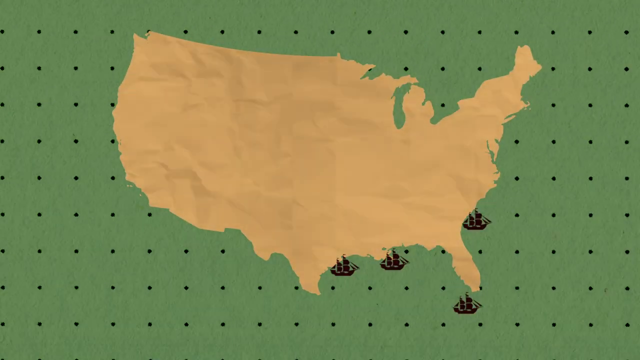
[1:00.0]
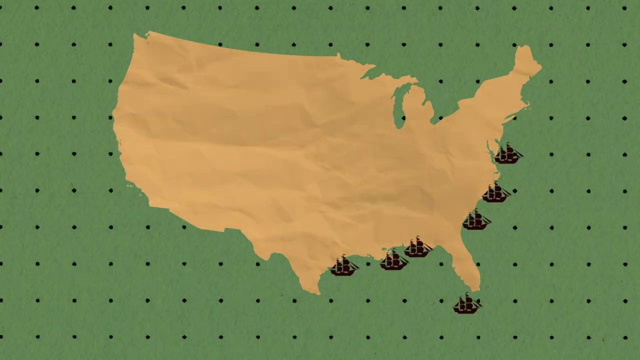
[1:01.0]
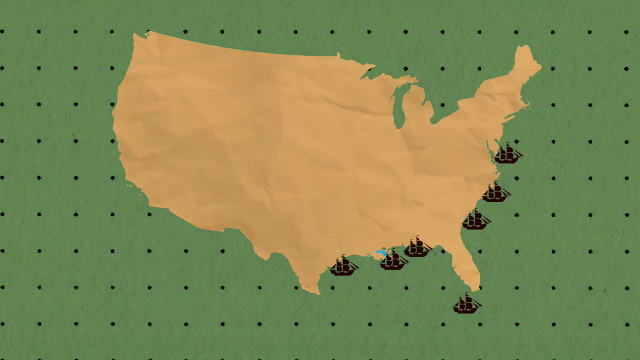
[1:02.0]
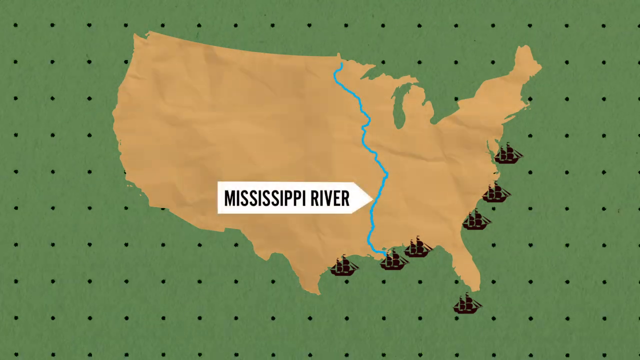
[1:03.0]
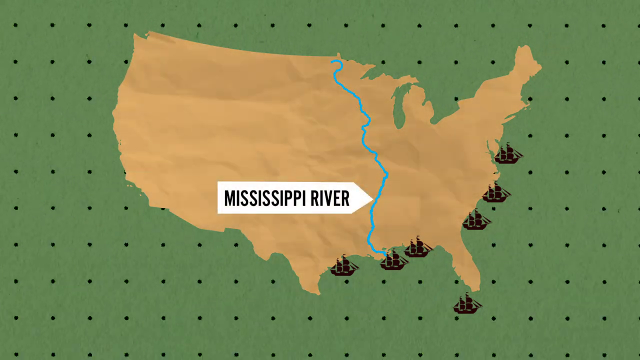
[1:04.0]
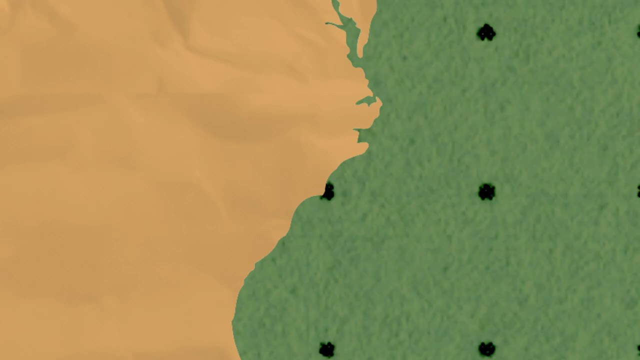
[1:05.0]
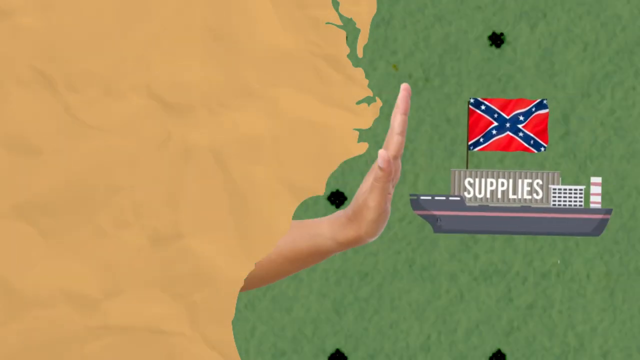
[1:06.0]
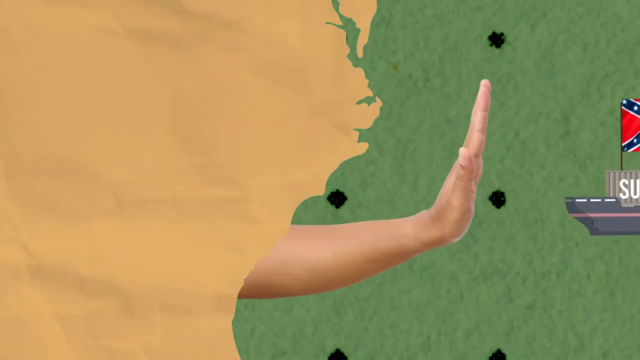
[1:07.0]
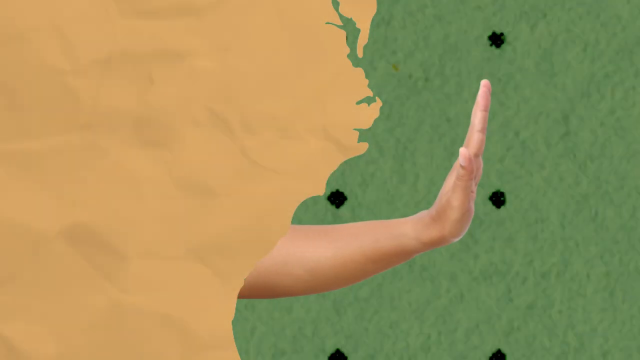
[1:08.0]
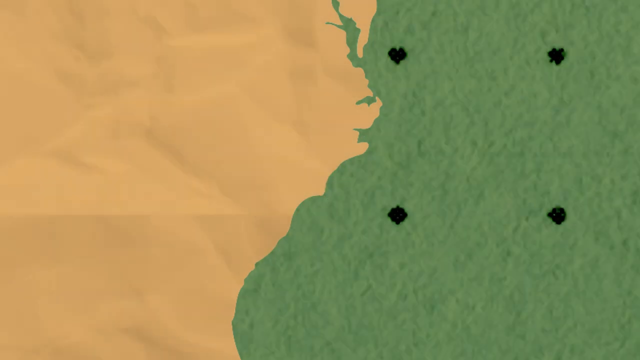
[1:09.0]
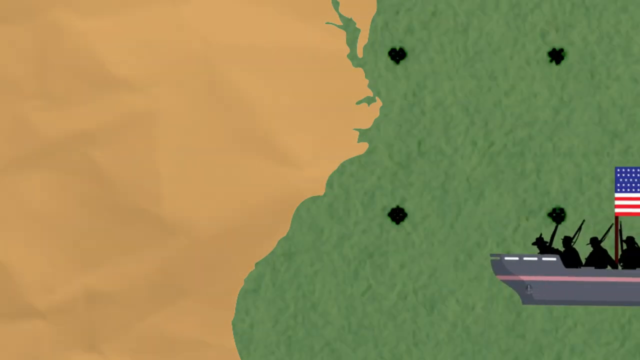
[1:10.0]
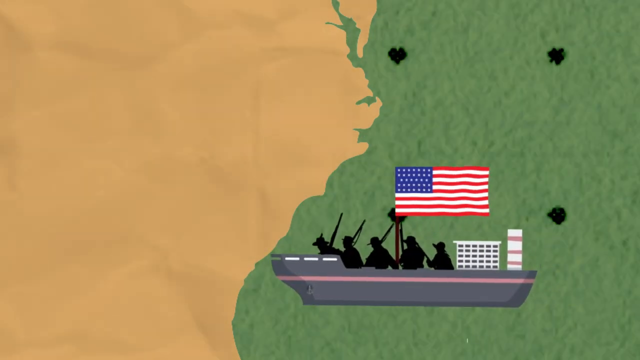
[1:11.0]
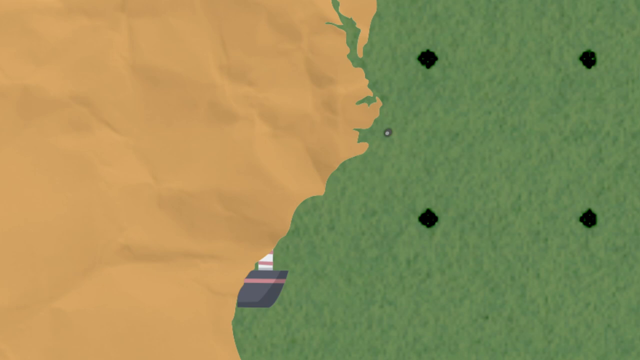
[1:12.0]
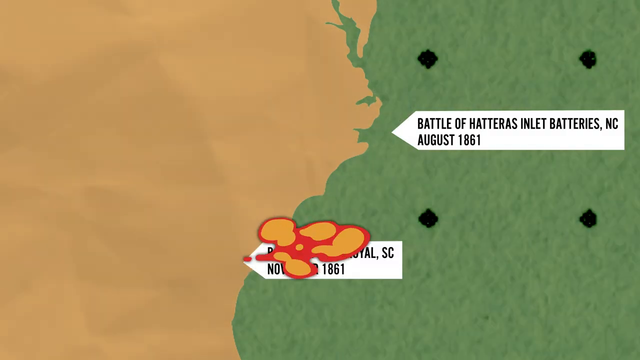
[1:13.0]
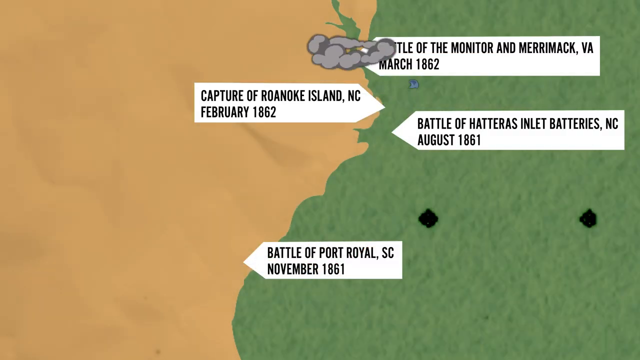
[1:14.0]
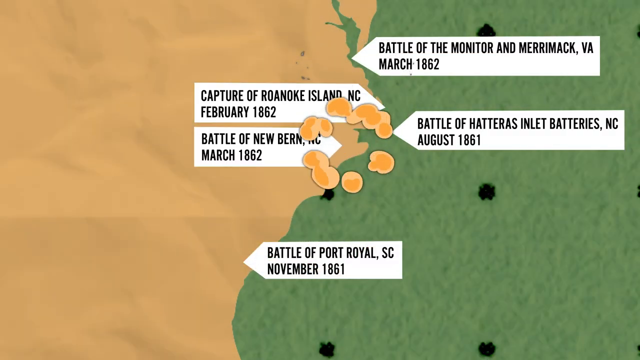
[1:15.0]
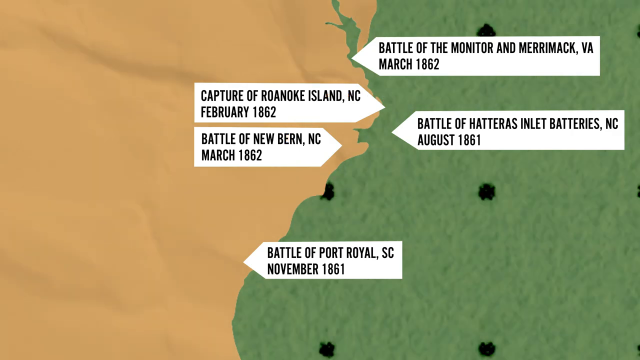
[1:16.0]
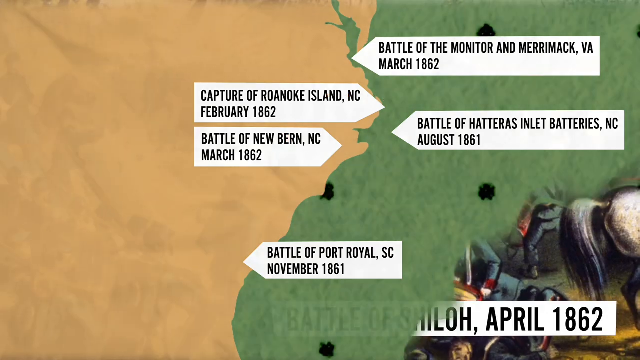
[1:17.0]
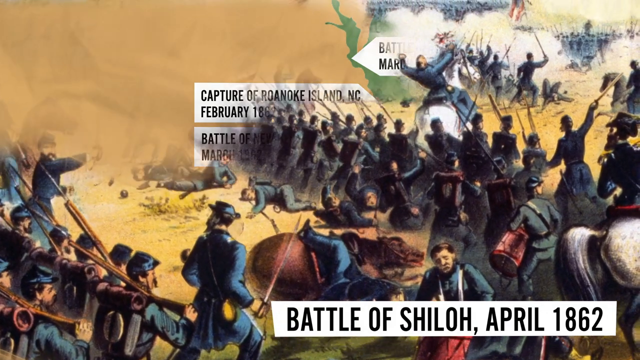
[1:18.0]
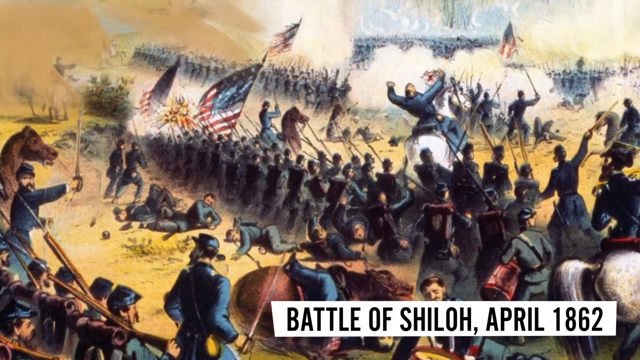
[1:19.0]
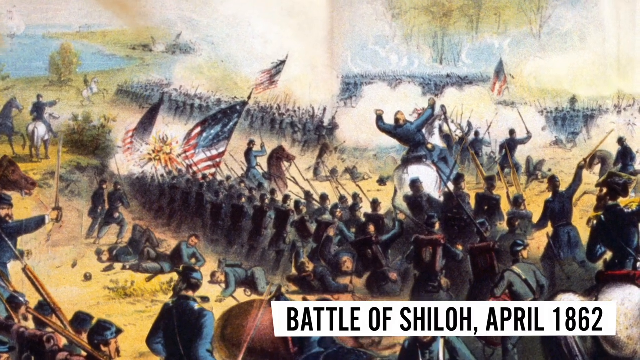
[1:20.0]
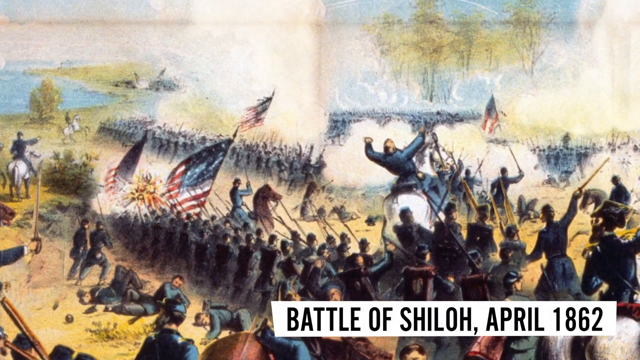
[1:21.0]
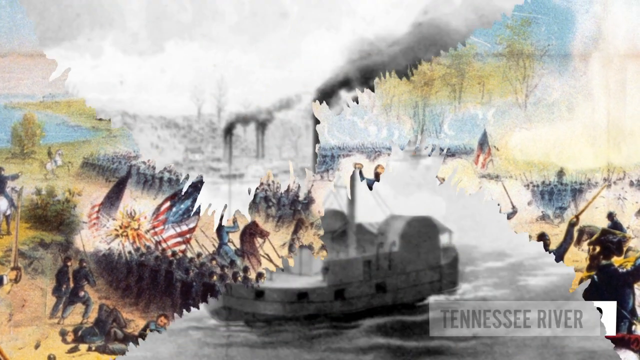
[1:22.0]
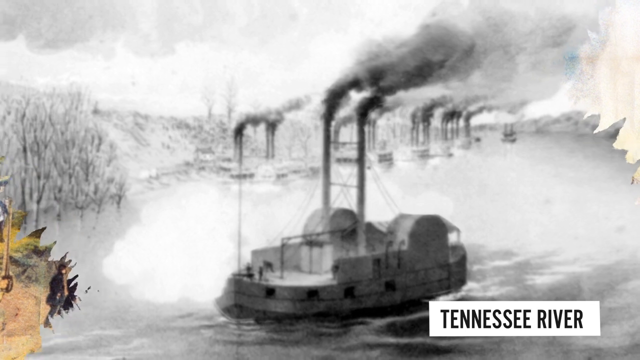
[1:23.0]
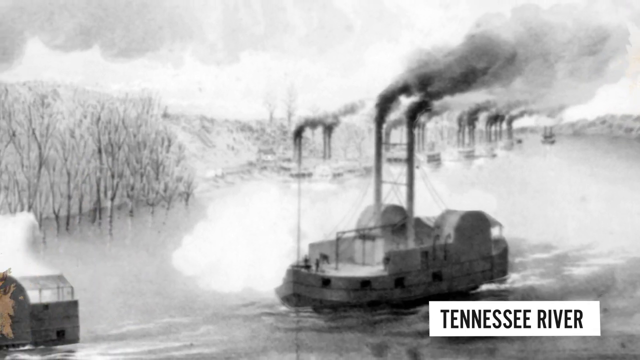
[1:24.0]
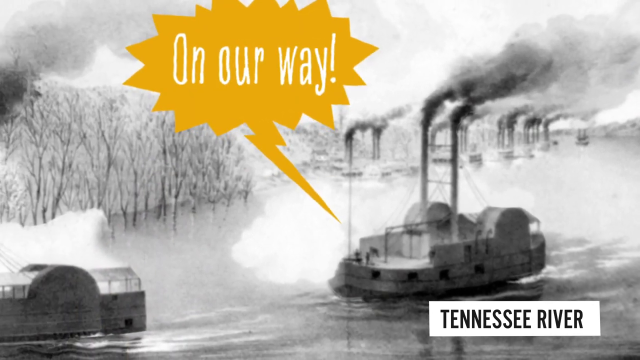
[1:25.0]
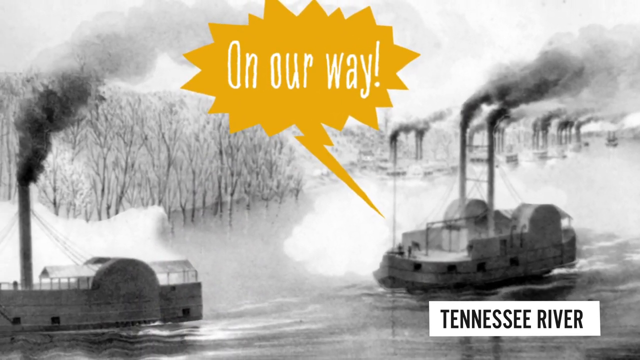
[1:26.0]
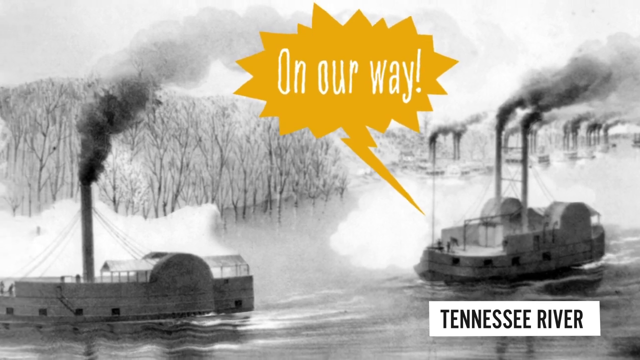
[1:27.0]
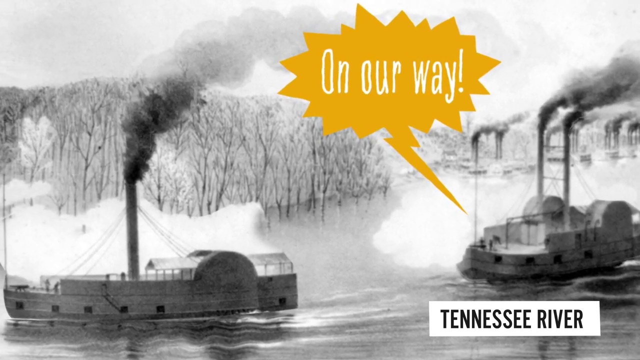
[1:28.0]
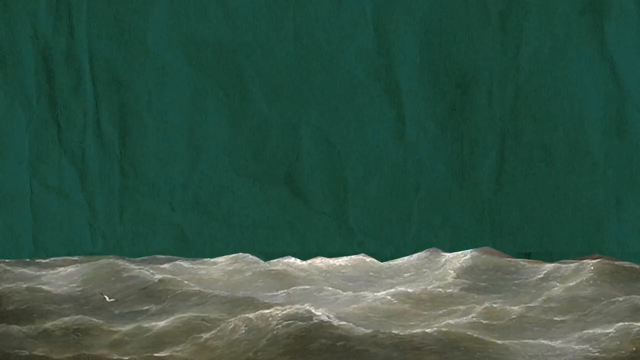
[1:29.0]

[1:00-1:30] An orange silhouetted map of the United States appears on a green background with black dots, with a number of boats situated along the left and bottom areas of the coast. A blue line appears down the country, not straight but with some curves and squiggles, and a pointed identification label comes up that says "Mississippi River." The camera zooms into an area of the east coast, showing a ship with a Confederate flag approaching, labeled "supplies." A hand and arm pop out of the side of the coast with the palm up in a gesture meaning stop or turn back, and the Confederate ship backs up and leaves. A new ship with silhouettes of soldiers with their guns, flying the American flag, approaches and is shown going into the country. New labels then appear marking five different battles. Another illustrated battle image follows, showing many rows of soldiers on grass with trees. Then there is a photograph of steam engines on the Tennessee River.